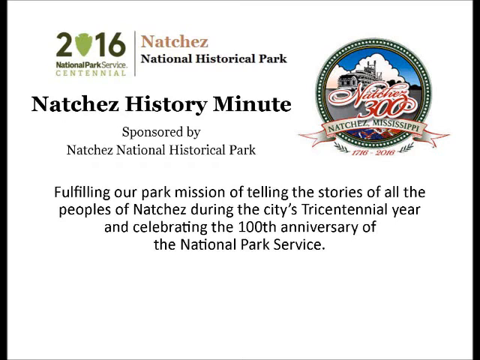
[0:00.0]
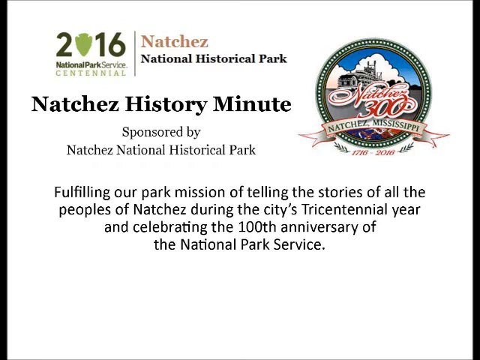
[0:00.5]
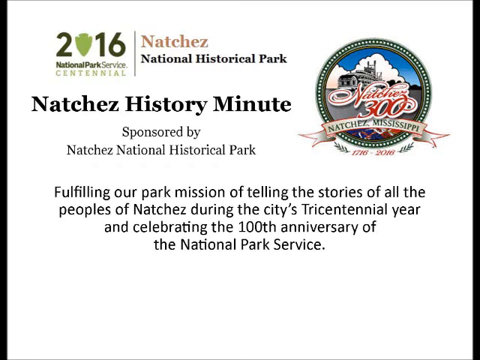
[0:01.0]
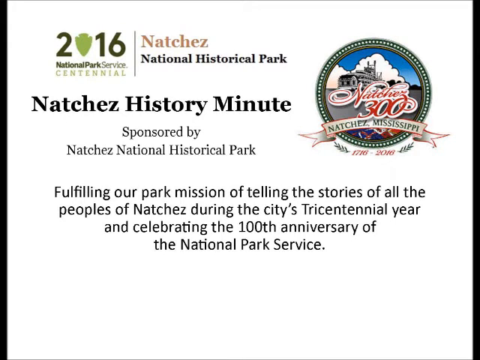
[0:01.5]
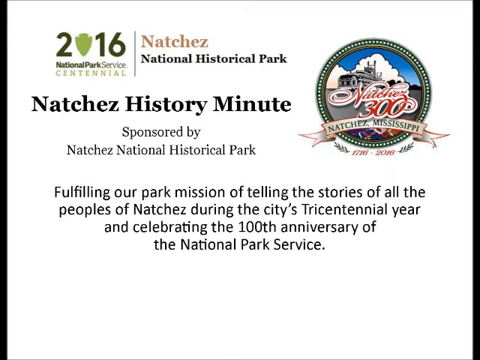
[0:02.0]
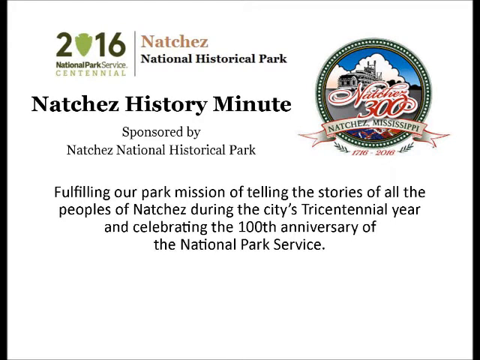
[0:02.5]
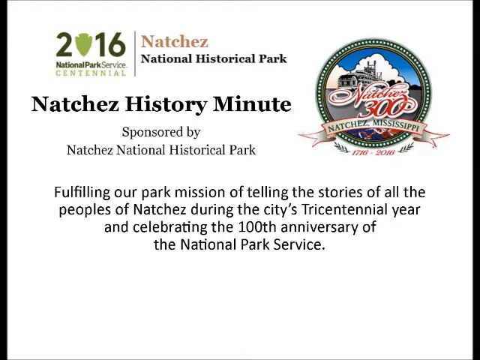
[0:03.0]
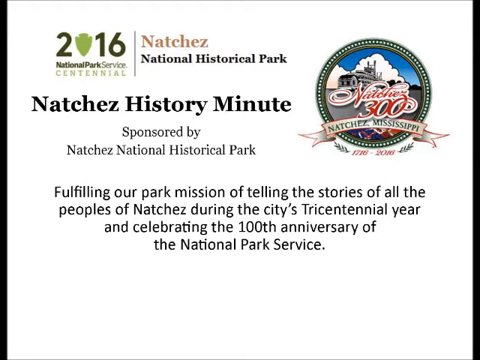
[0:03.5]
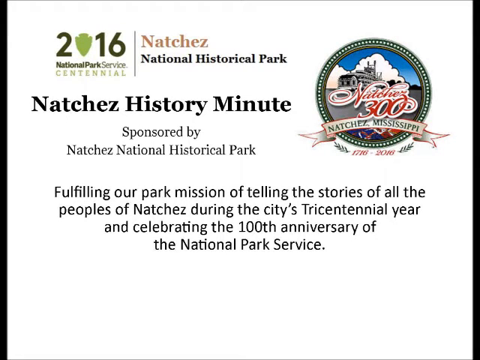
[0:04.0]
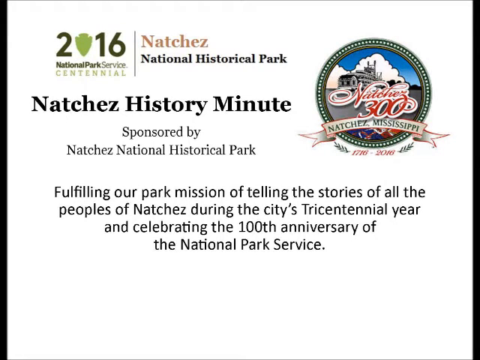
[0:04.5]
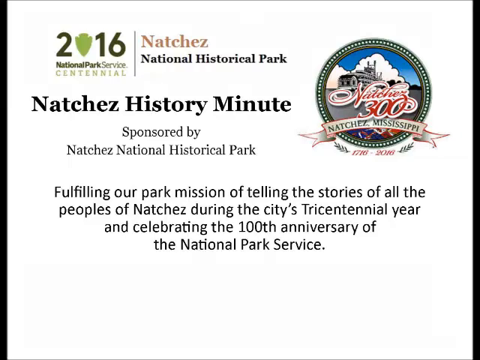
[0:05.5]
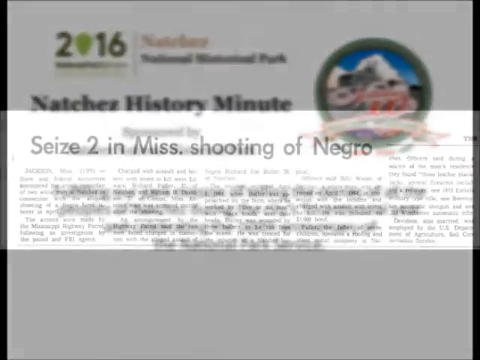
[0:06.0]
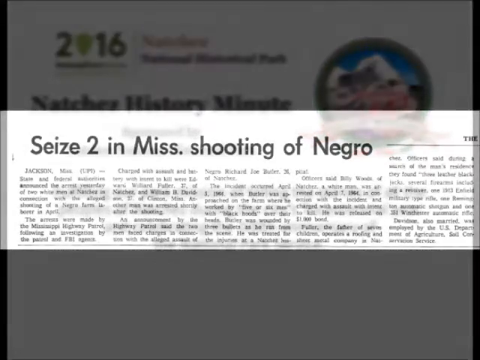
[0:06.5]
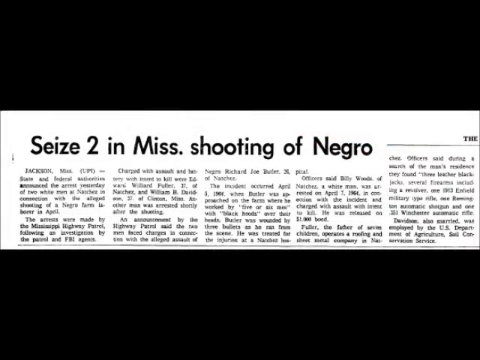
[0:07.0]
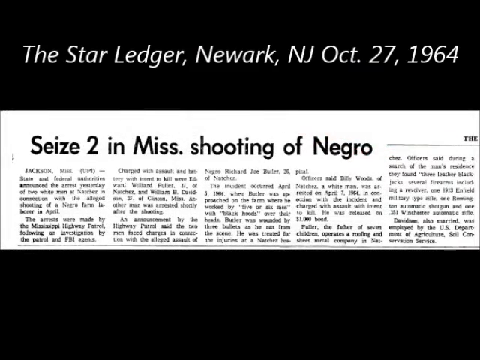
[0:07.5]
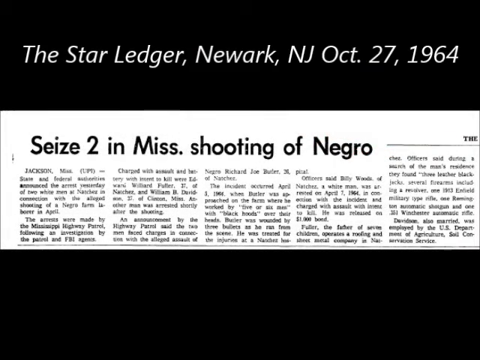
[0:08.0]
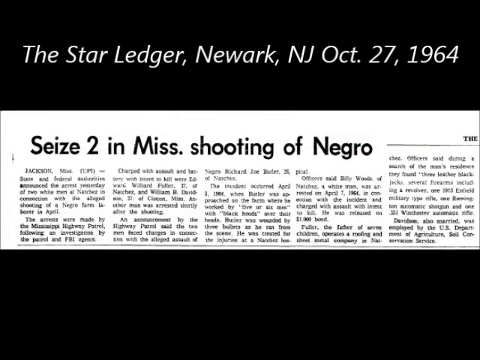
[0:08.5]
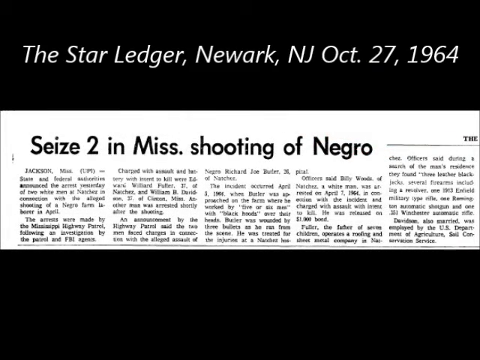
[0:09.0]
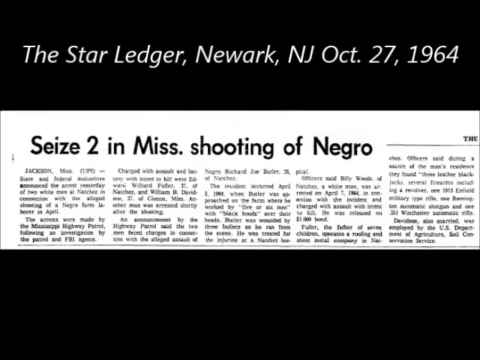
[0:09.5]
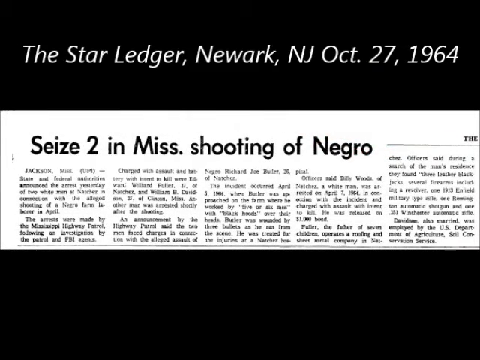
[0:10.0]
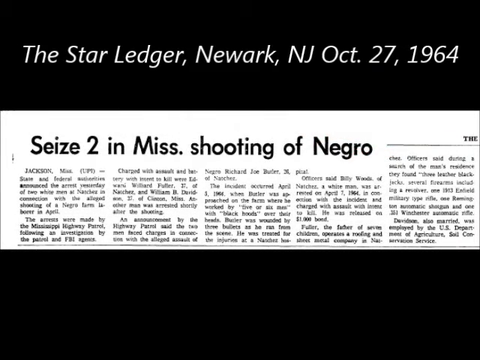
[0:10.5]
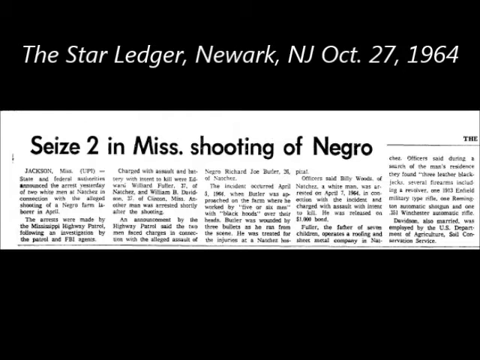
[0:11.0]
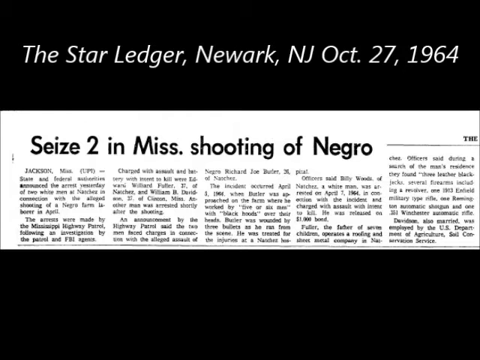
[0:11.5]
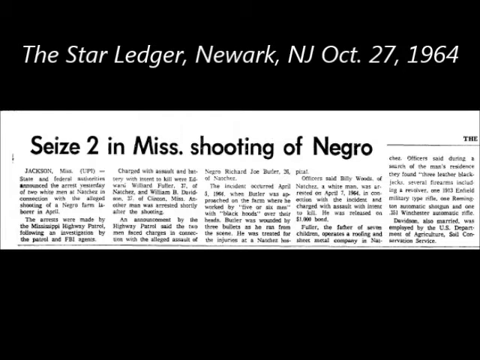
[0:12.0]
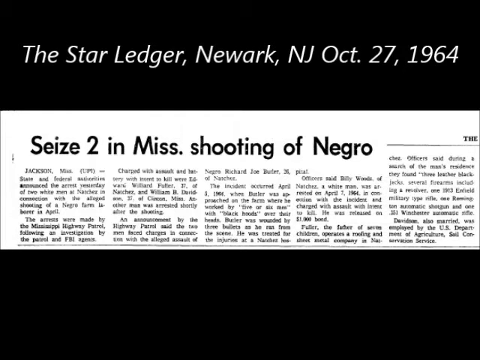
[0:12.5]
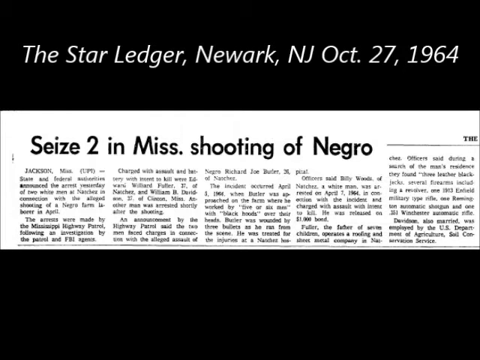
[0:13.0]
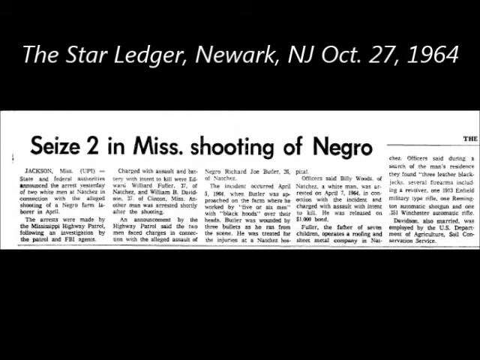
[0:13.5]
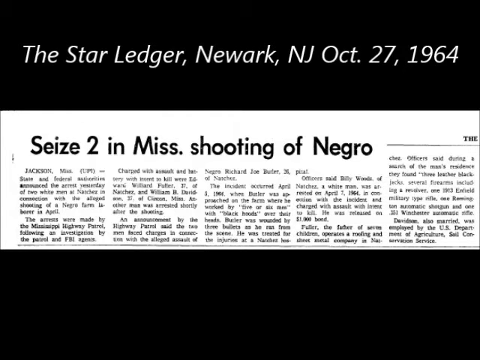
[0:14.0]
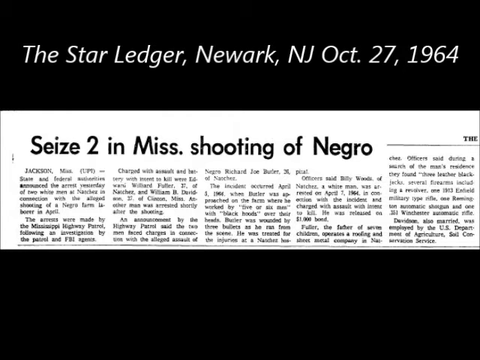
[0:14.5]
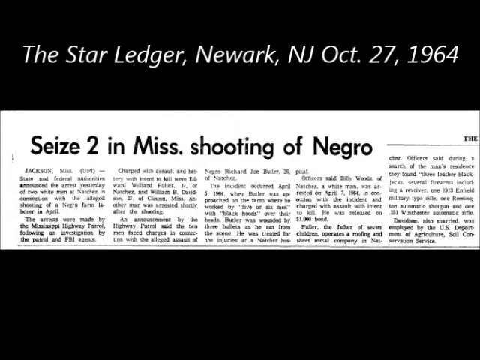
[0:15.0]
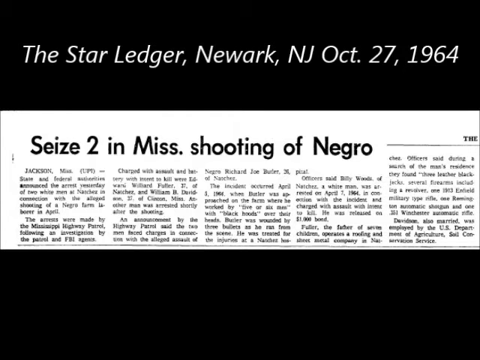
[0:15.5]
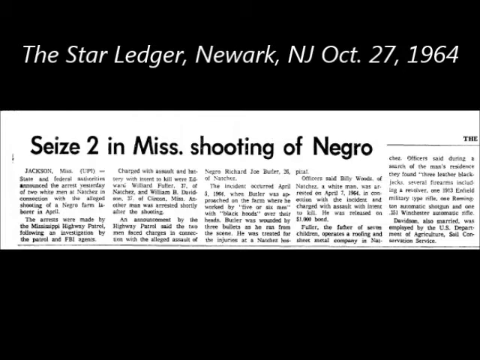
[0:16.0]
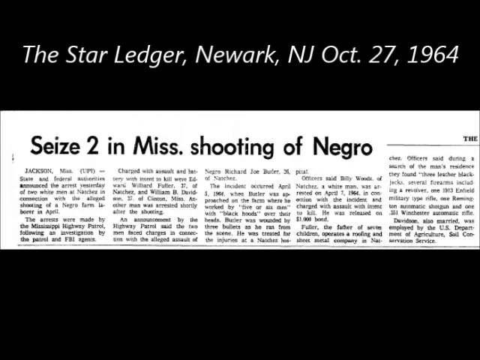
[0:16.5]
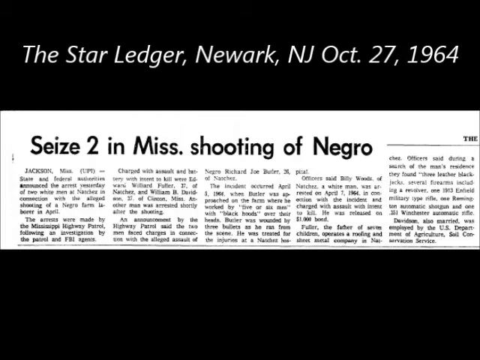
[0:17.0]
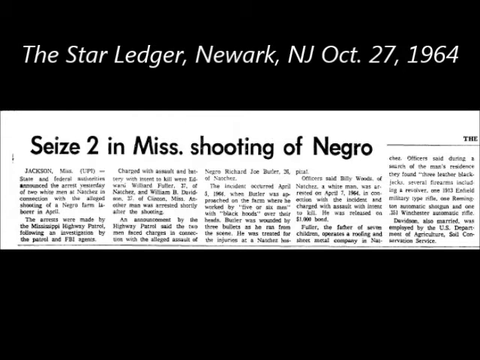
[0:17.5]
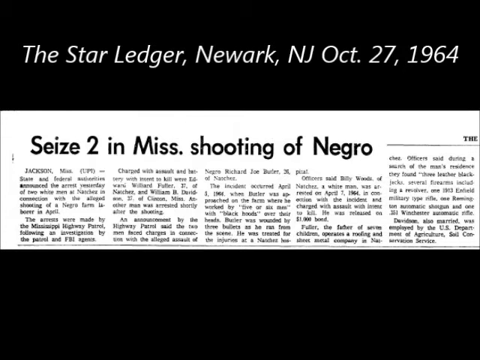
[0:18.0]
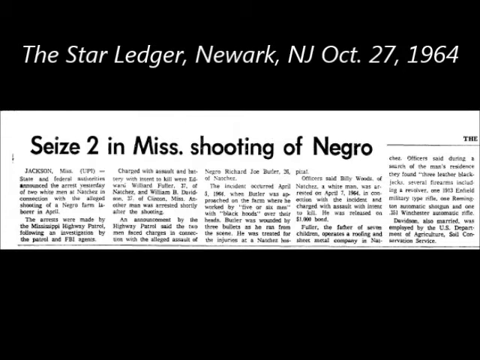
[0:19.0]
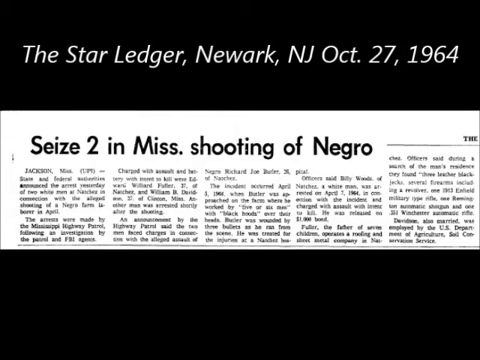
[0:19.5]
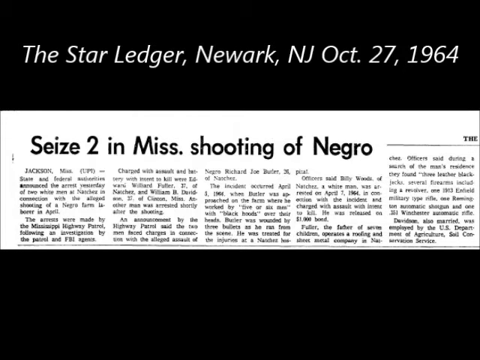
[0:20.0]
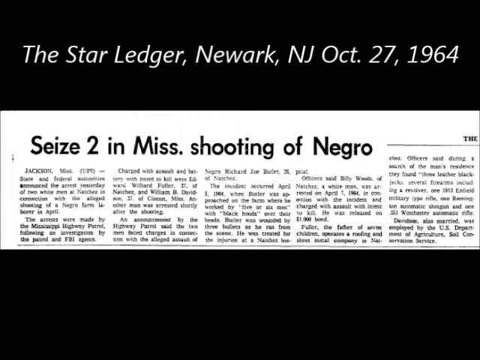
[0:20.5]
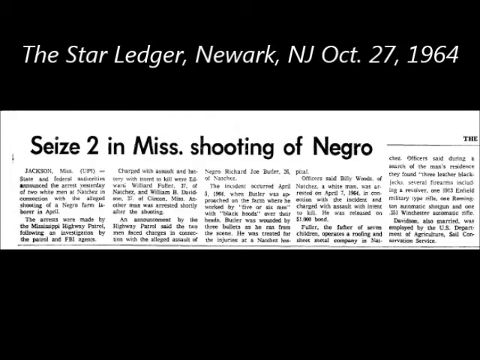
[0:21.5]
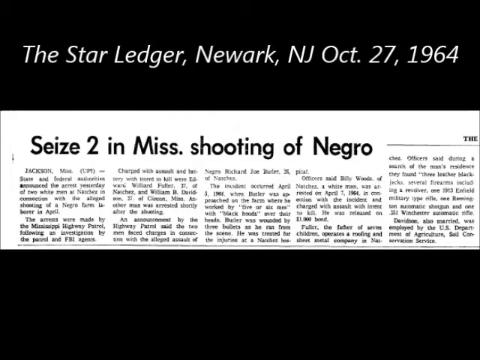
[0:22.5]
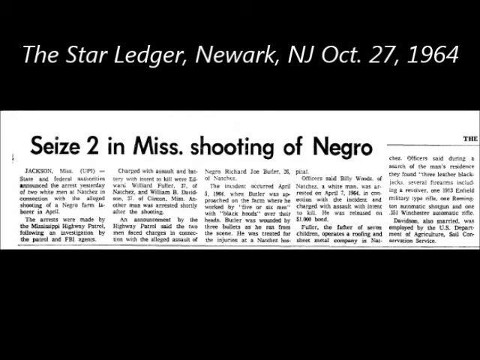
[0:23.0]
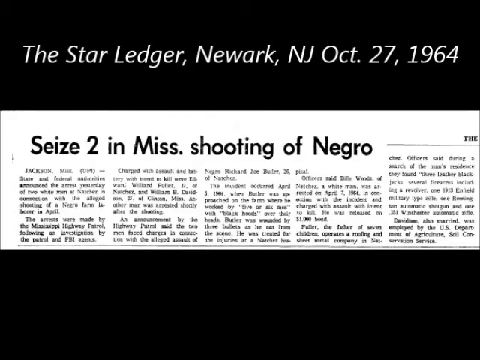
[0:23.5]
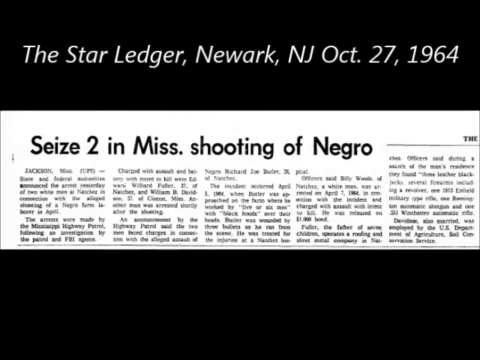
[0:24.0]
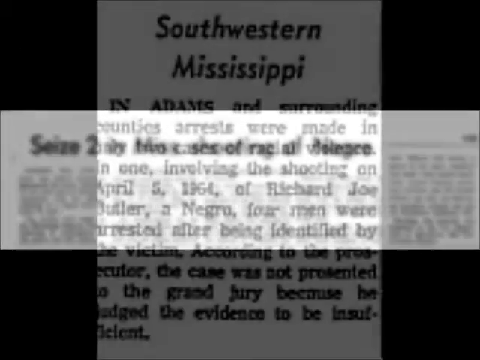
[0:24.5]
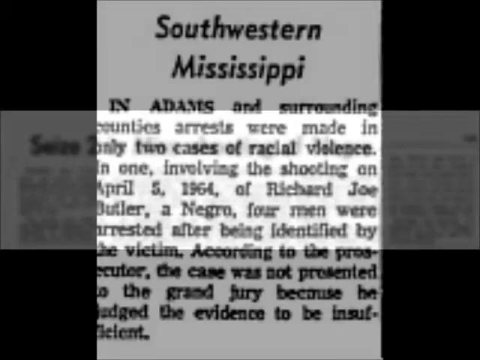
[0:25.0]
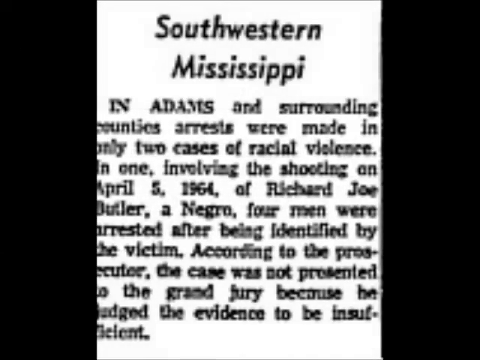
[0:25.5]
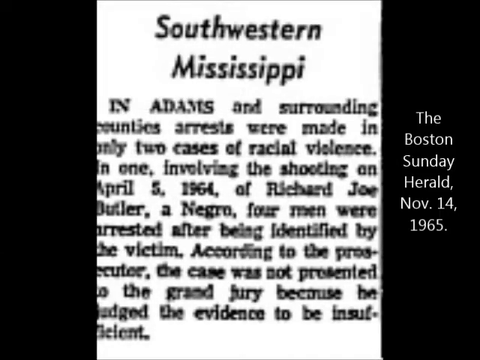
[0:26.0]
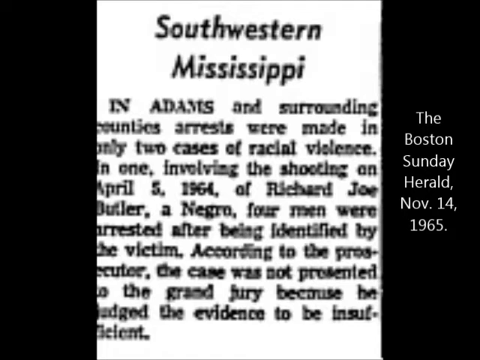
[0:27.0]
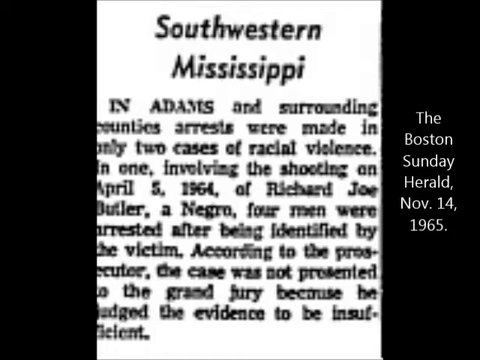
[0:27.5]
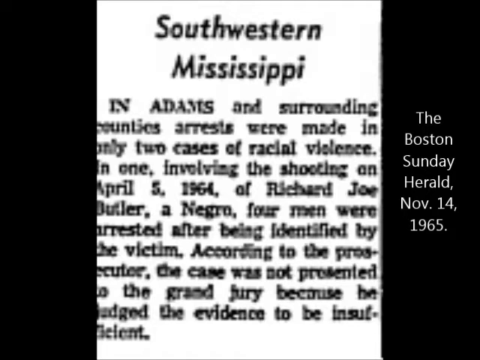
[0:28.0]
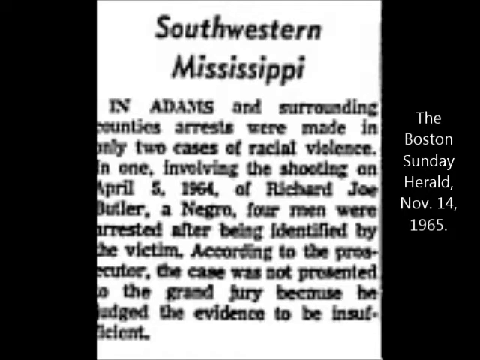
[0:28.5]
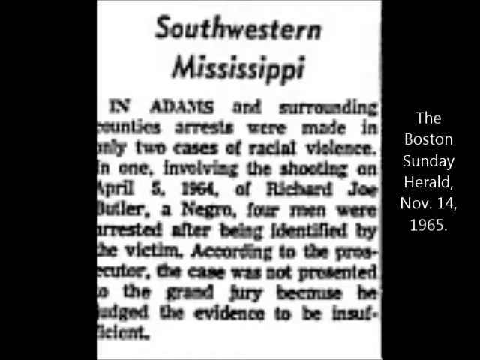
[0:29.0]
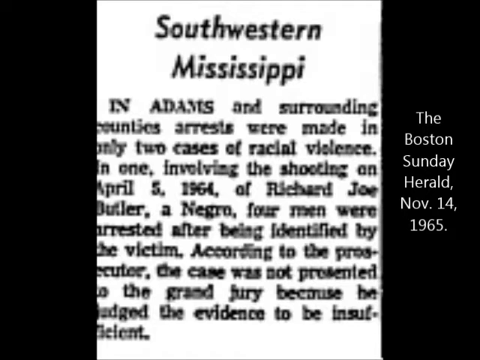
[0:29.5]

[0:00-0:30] A web page for the Natchez National Historical Park is shown. On the left it says "2016 National Park Service Centennial," with the zero represented by a green arrowhead. The headline reads "Natchez History Minute sponsored by Natchez National Historical Park," followed by the text "Fulfilling our park mission of telling the stories of all the peoples of Natchez during the city's tricentennial year and celebrating the 100th anniversary of the National Park Service." On the right is the icon and emblem for Natchez 300, the Natchez, Mississippi tricentennial: a circular emblem with a green outline, a blue sky and a white cloud in the background, what looks to be a gray building, and "Natchez 300" in red. The view then moves to a newspaper article from years ago, set against a black background, with the headline "Seize 2 in Mississippi shooting of Negro." The page's heading says the article is from the Star-Ledger, Newark, New Jersey, October 27, 1964. Next, another newspaper article appears in close-up: a short article titled "Southwestern Mississippi," and on the right it says it is from the Boston Sunday Herald, November 14, 1965.